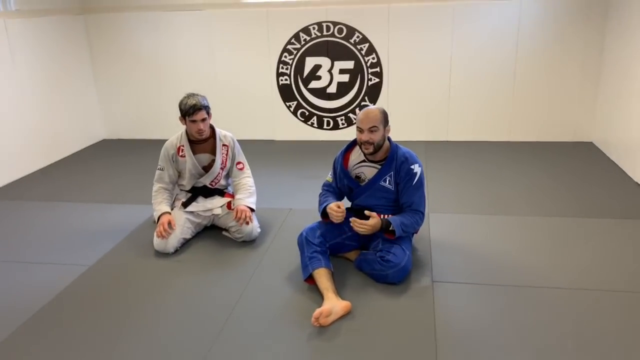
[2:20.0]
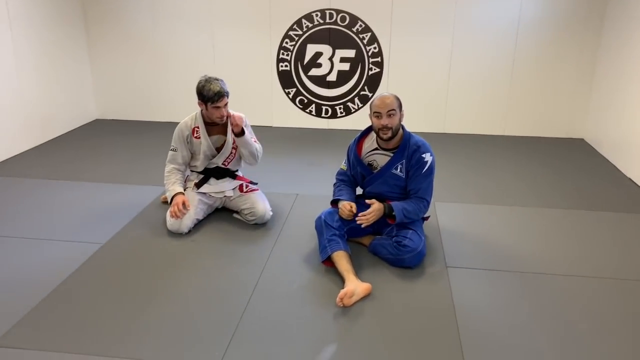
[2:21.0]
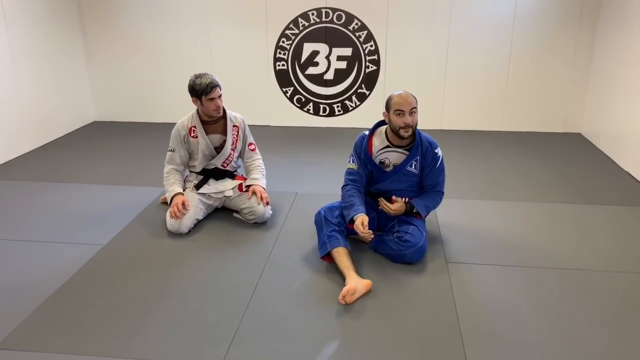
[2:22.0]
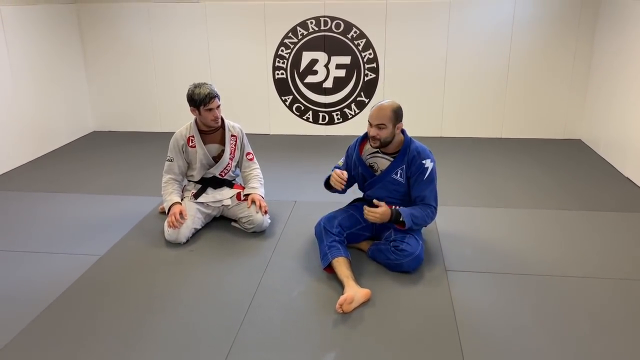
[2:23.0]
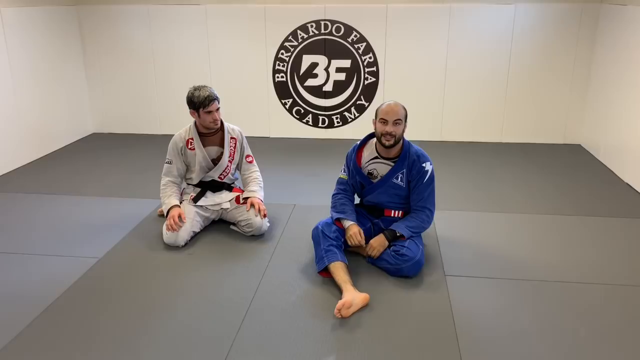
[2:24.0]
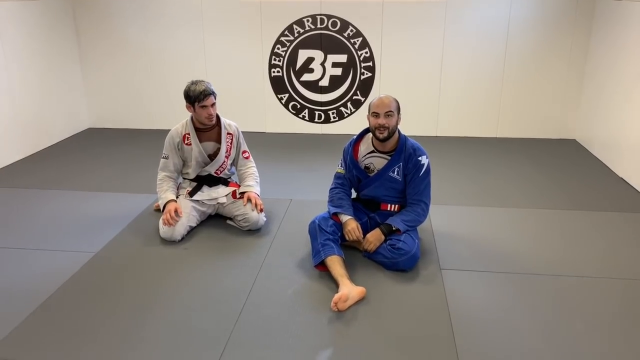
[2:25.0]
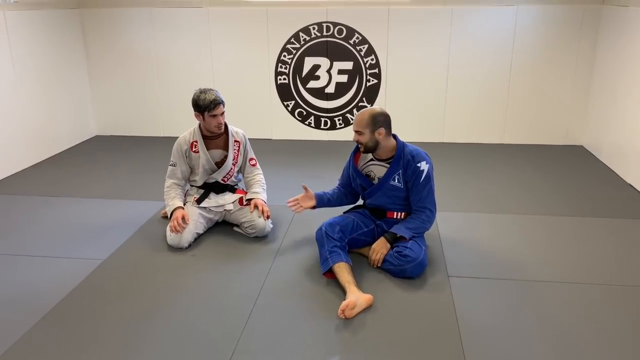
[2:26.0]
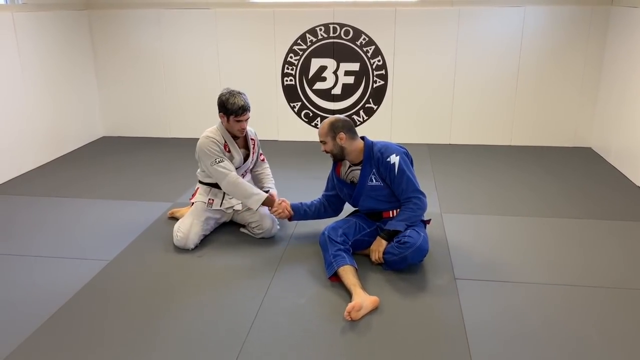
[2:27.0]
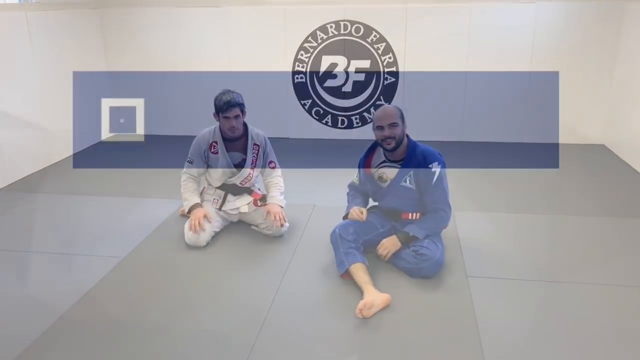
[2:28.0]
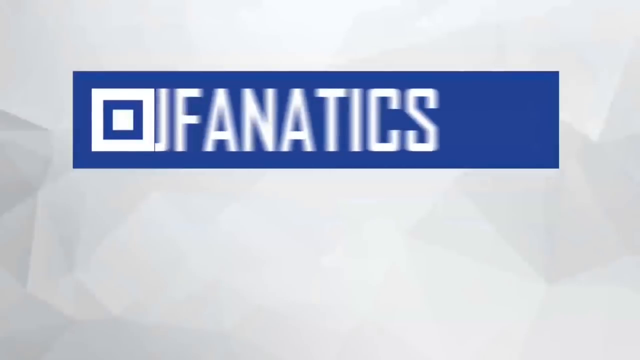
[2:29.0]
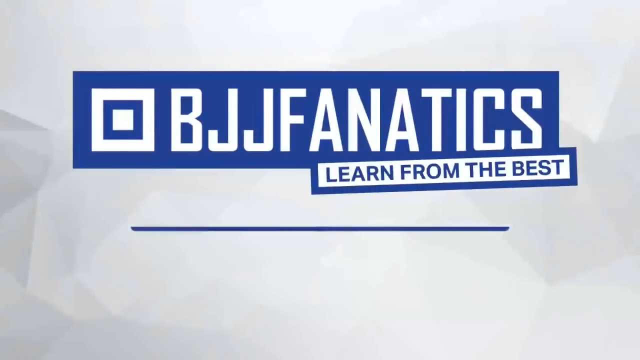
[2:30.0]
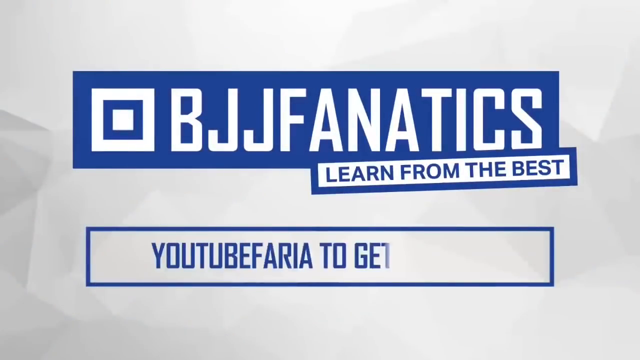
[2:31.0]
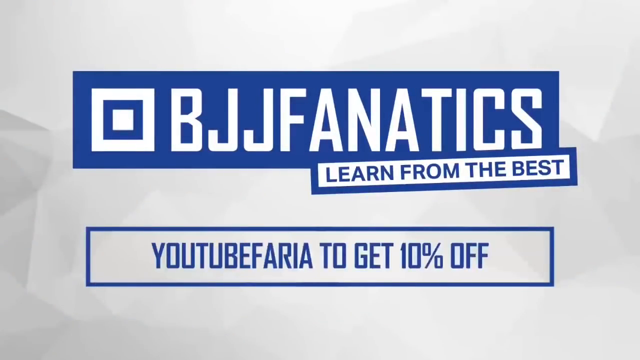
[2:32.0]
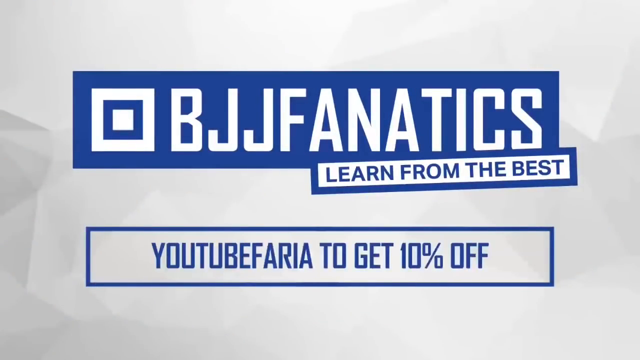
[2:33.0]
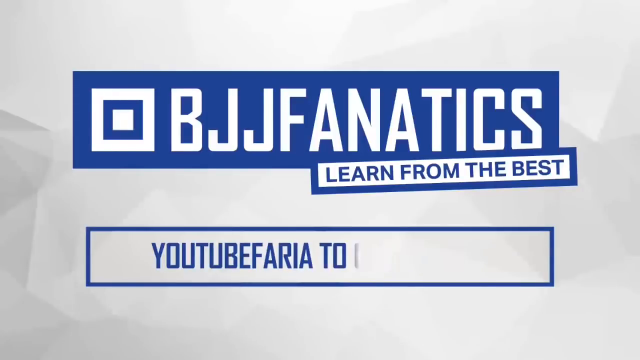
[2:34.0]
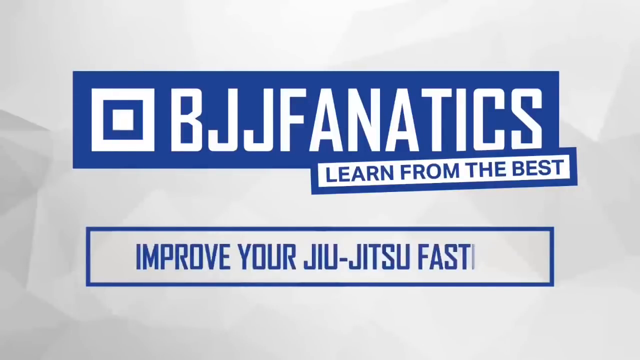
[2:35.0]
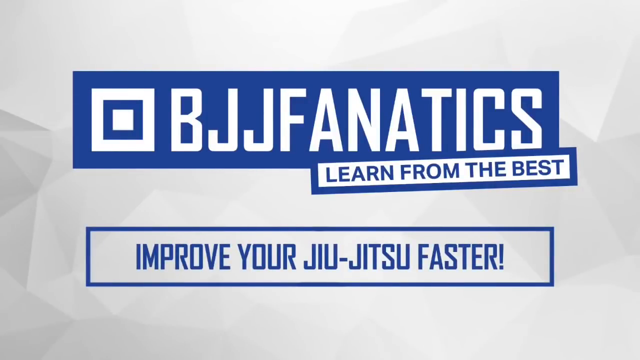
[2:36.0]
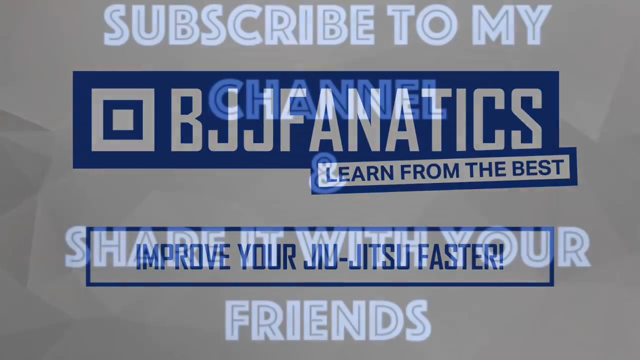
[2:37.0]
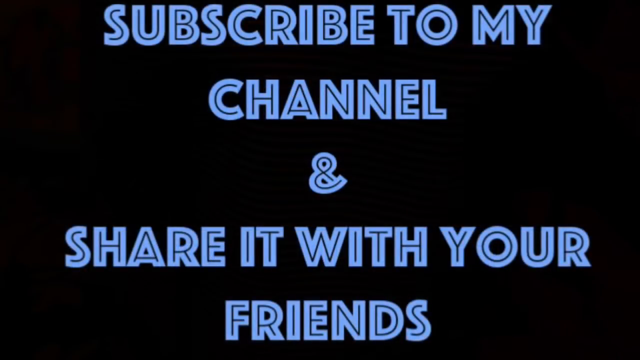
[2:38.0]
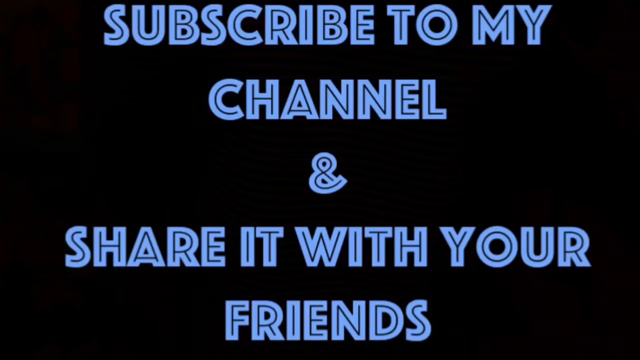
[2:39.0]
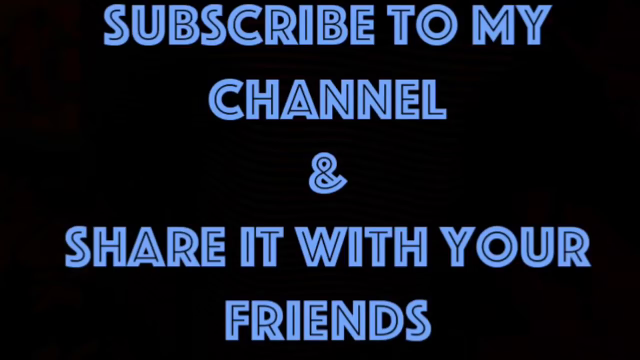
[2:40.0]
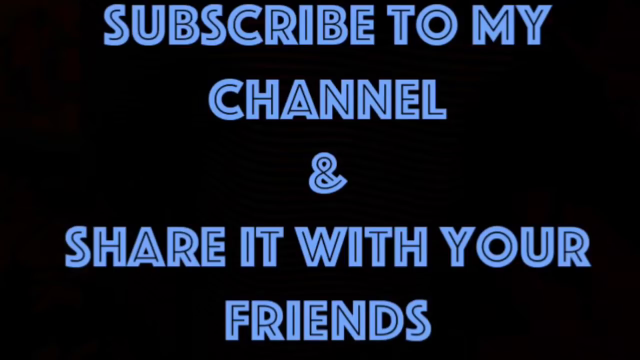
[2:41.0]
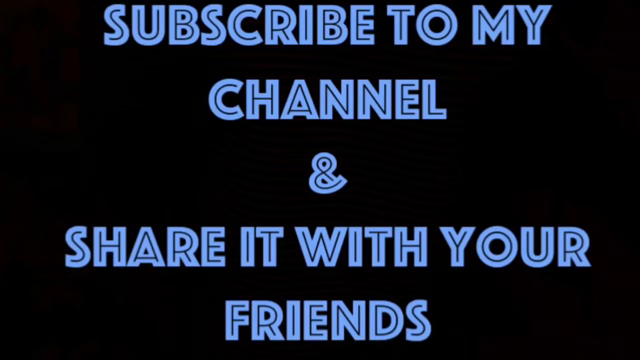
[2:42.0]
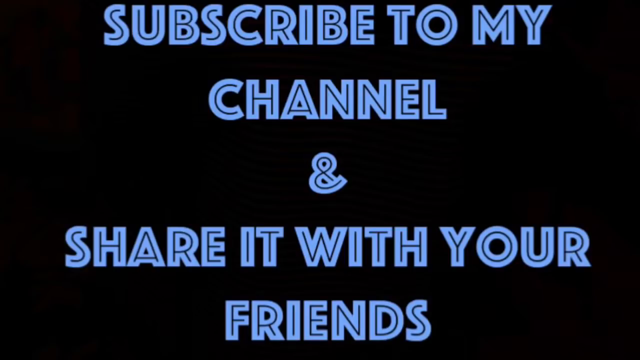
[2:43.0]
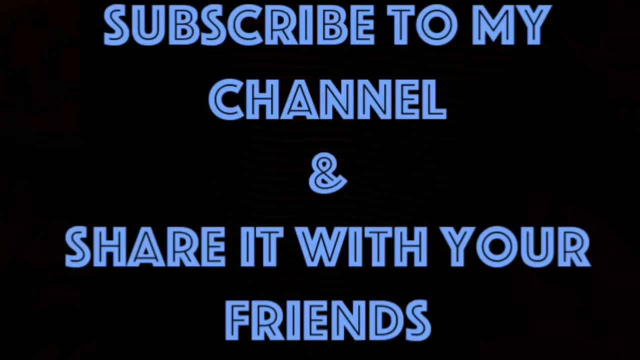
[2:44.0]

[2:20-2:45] The two are almost back where they were at the start, in the same general spots: the man in the white uniform on the left side of the screen and the man in the blue uniform still on the right. The man in white is sitting the exact same way he was when the video started. The man in blue sits cross-legged, talking and using his hands as he talks: shaking his hand, opening up his palm, putting one palm in front of the other, and sometimes raising his left hand. At the end they shake hands, both using their right hands. The video then cuts to text reading "BJJ fanatics learn from the best", followed by text including "YouTube F-A-R-I-A to get 10 off" and "subscribe to my channel and share it with your friends".